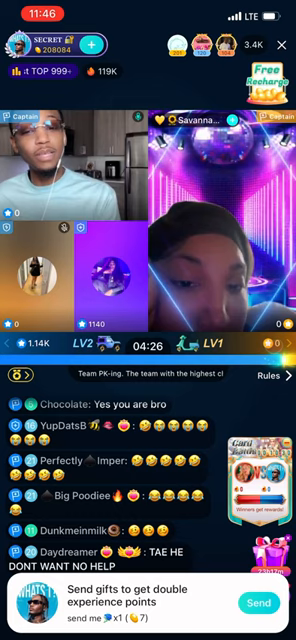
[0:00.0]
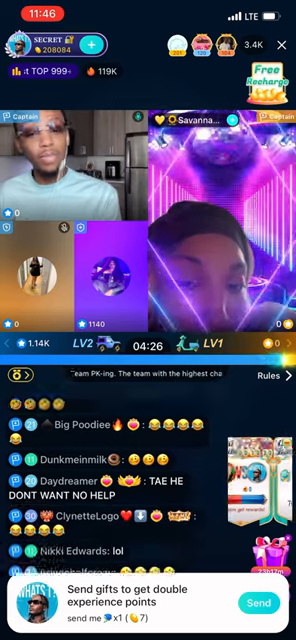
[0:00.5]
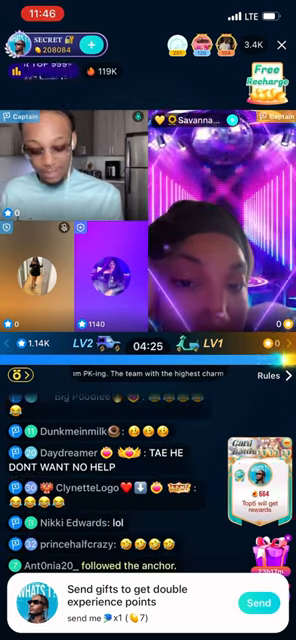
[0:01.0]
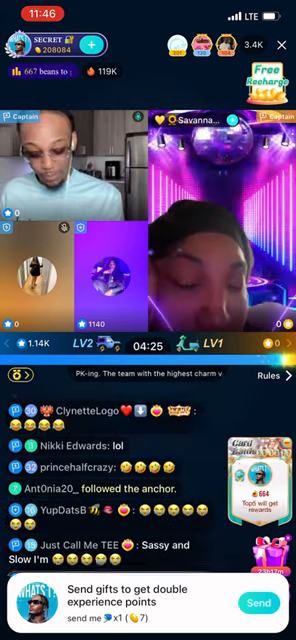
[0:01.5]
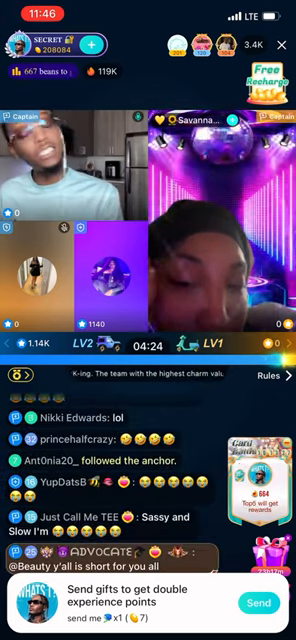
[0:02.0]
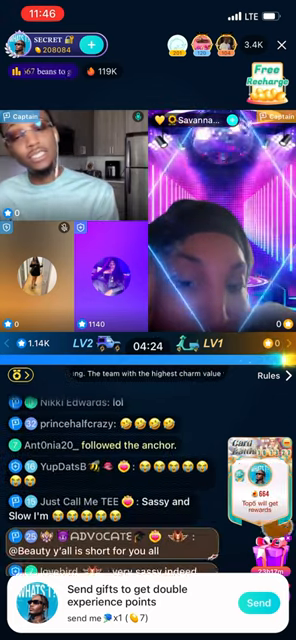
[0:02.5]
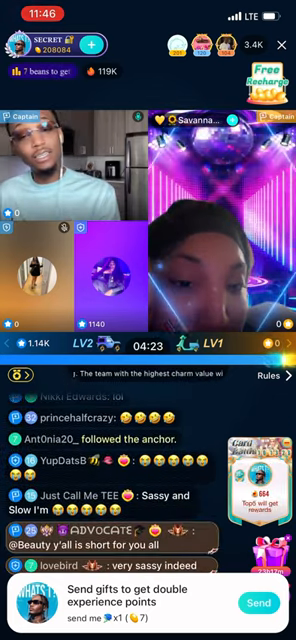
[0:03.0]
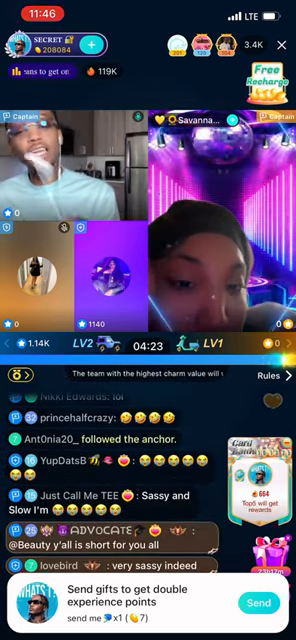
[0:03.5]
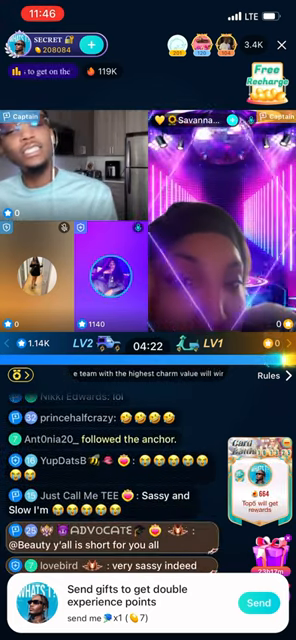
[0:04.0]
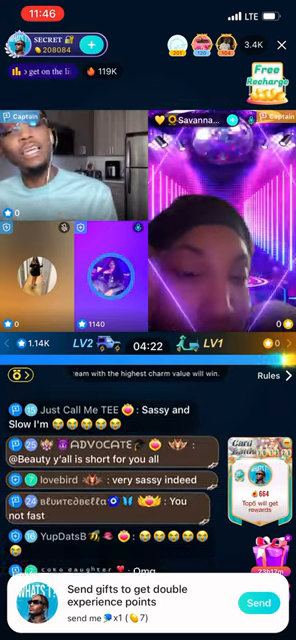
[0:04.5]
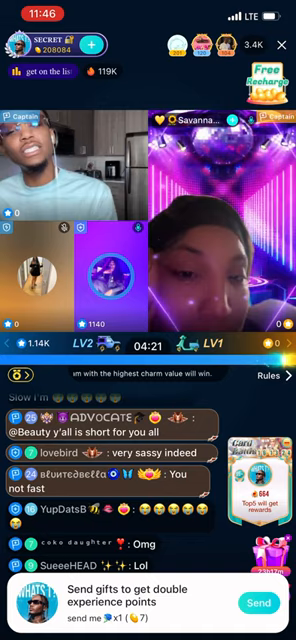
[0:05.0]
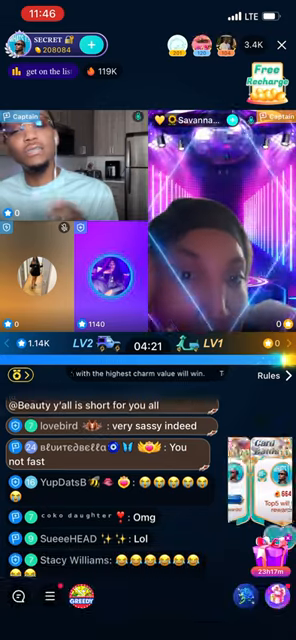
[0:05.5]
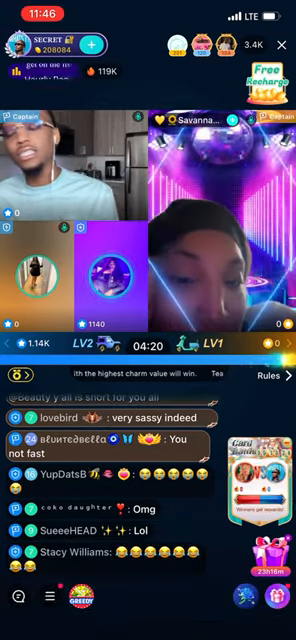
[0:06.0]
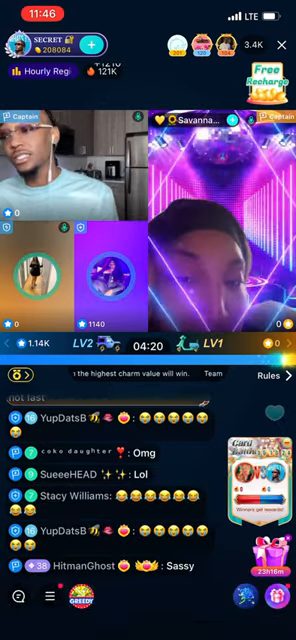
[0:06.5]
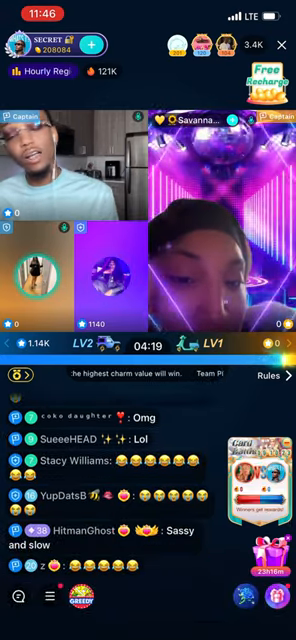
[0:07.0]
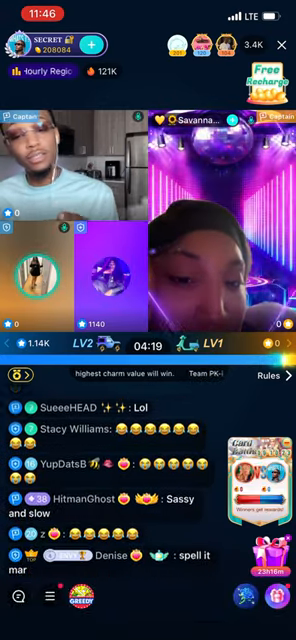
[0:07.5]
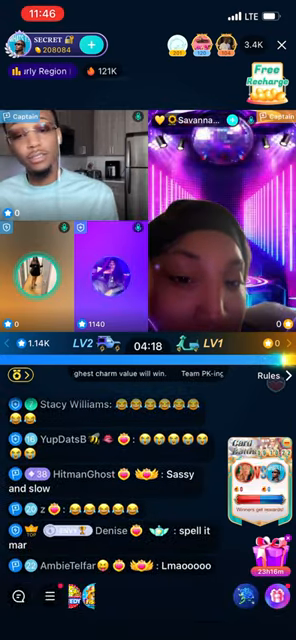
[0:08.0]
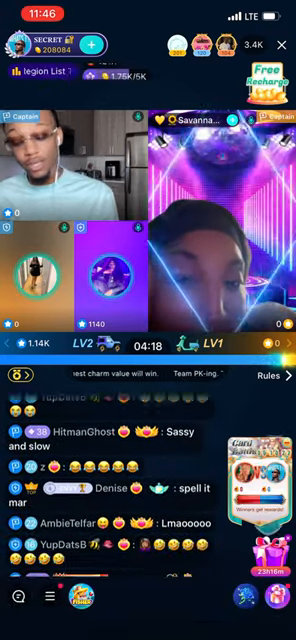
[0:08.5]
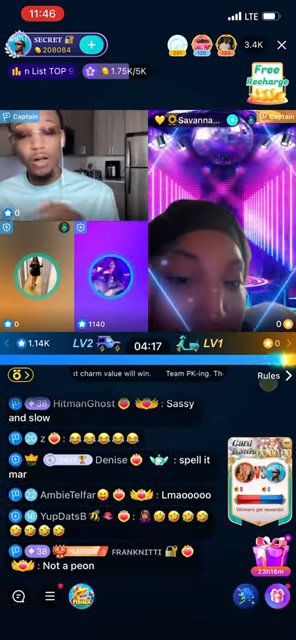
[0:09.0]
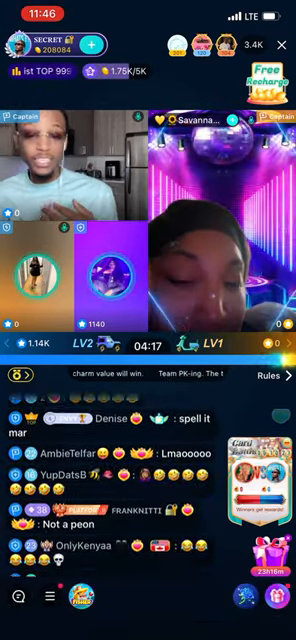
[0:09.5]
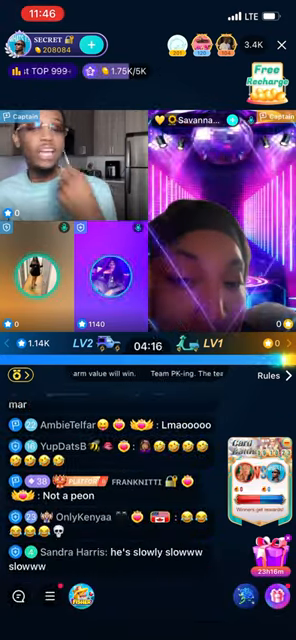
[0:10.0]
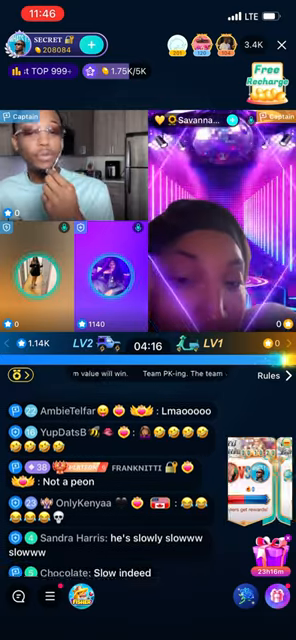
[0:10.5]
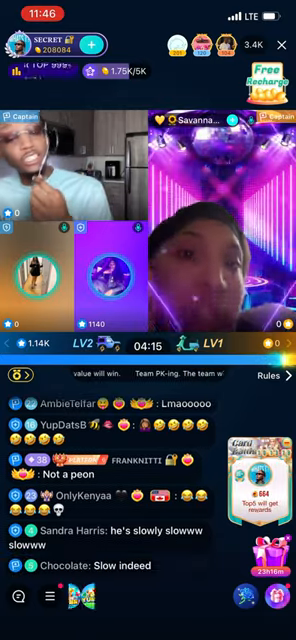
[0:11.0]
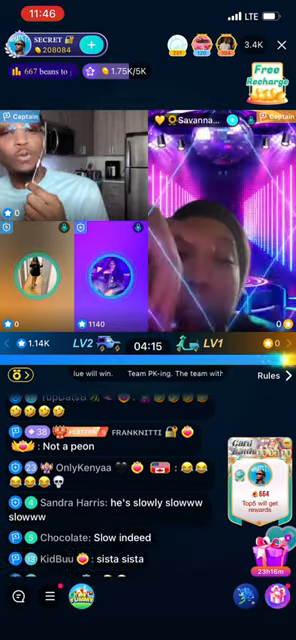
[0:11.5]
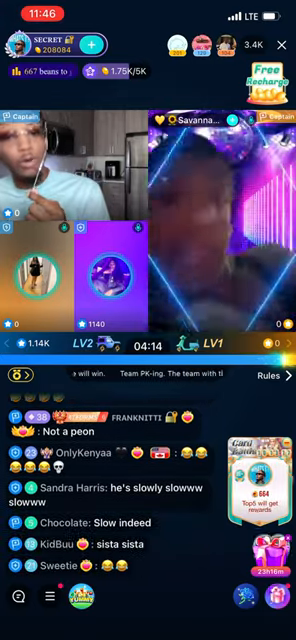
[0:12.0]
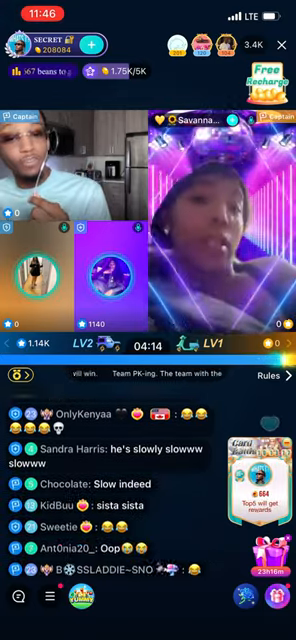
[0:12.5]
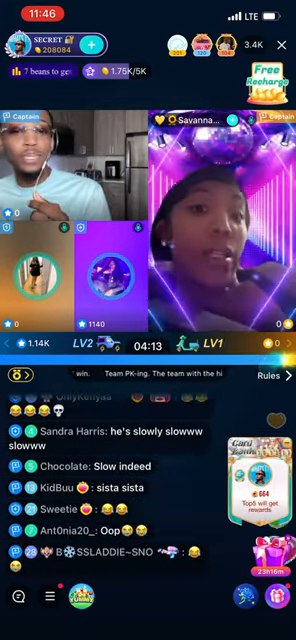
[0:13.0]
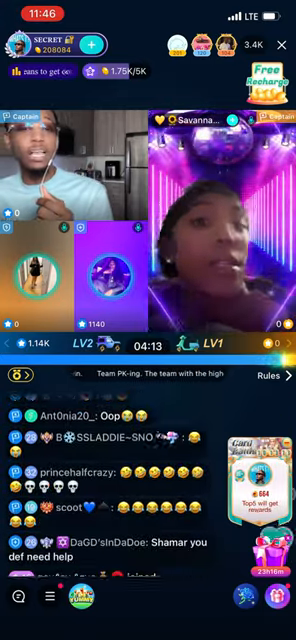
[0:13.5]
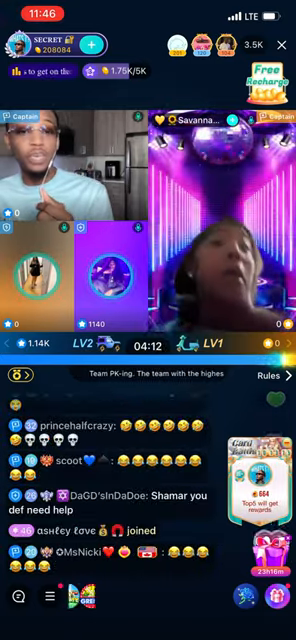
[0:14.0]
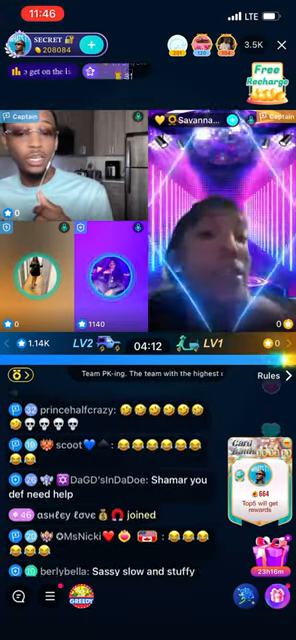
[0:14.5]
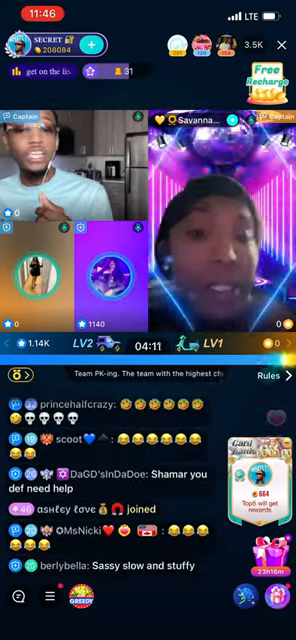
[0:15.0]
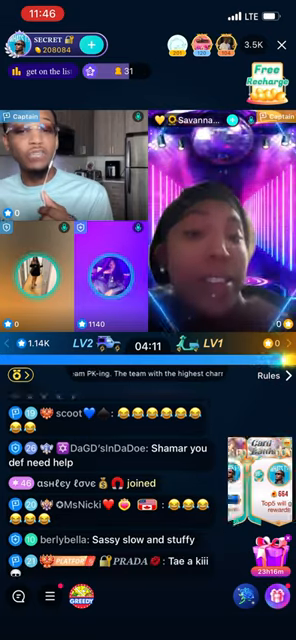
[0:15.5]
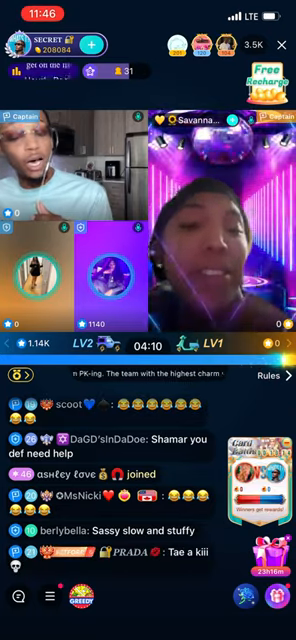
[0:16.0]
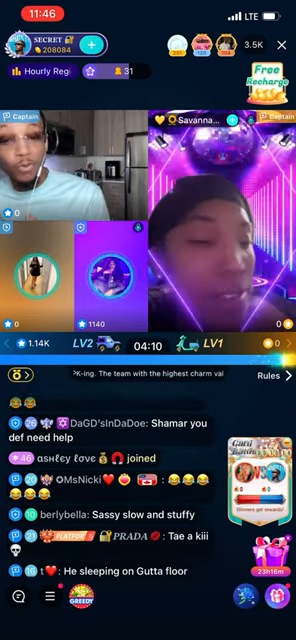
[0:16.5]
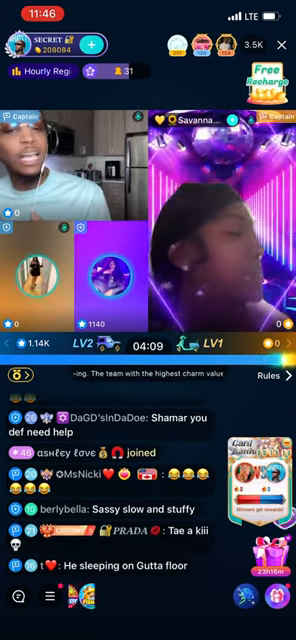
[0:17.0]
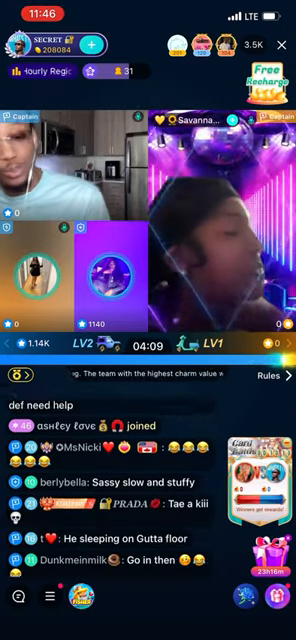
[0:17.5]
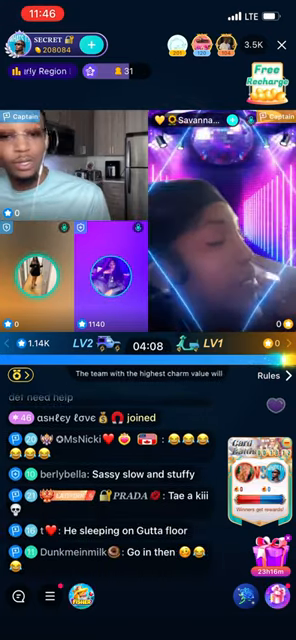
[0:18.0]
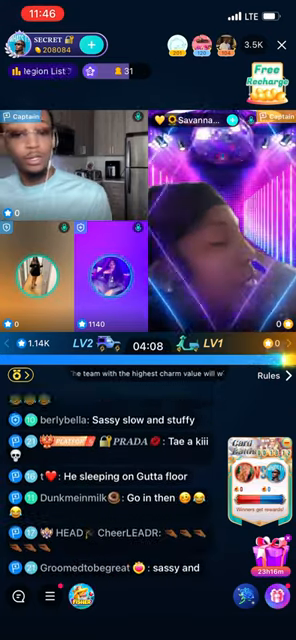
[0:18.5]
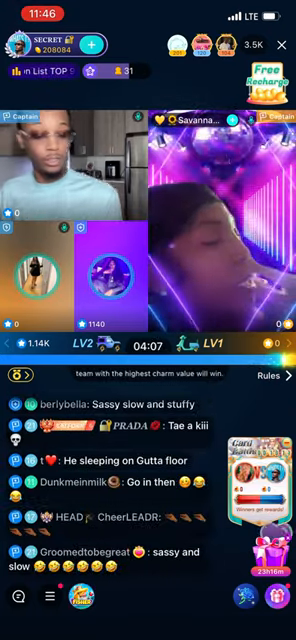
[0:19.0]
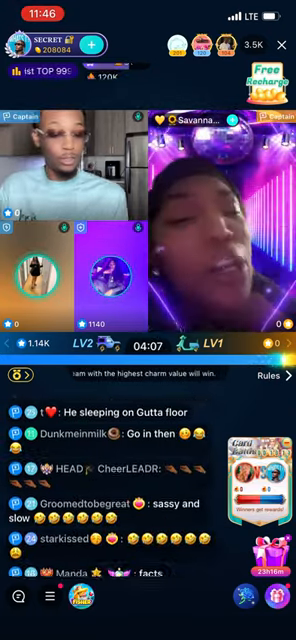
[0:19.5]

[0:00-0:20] A gaming platform shows two players streaming video of themselves playing in real time, along with a chat for the people watching the two players compete. The screen shows how much each player has earned, how well they are doing against each other, their levels, and how long they have been playing: the timer reads 4 minutes 12, one player is level 1 and the other is level 2. The viewer count reads 1.14 thousand, and the points earned are displayed. In the chat area many people comment at the same time, with the option to post emojis. There are also options to send gifts to get experience points and to send a free recharge.